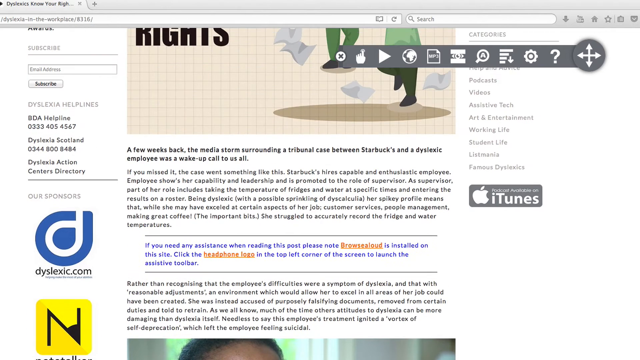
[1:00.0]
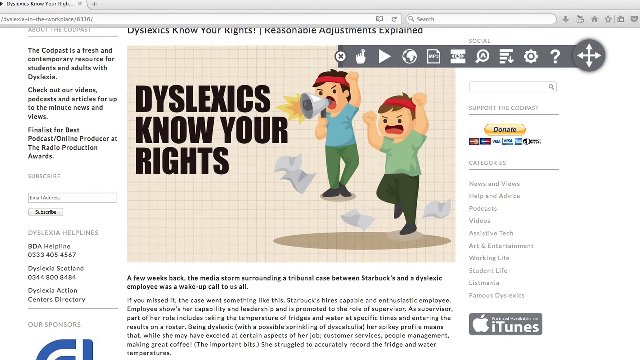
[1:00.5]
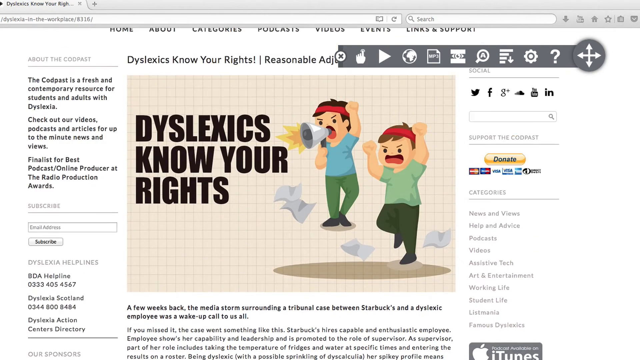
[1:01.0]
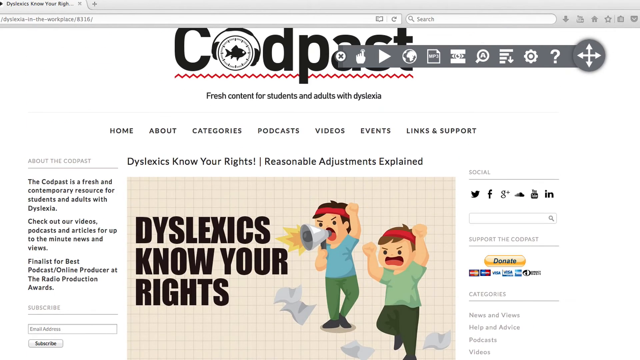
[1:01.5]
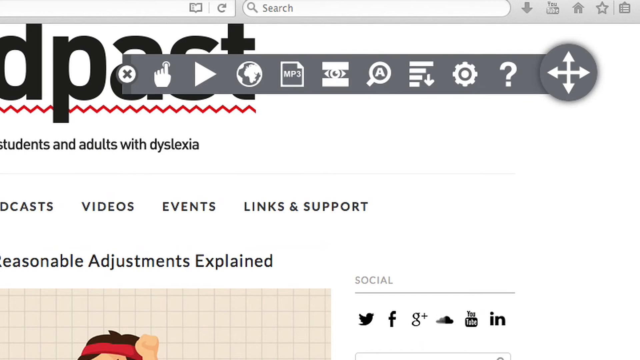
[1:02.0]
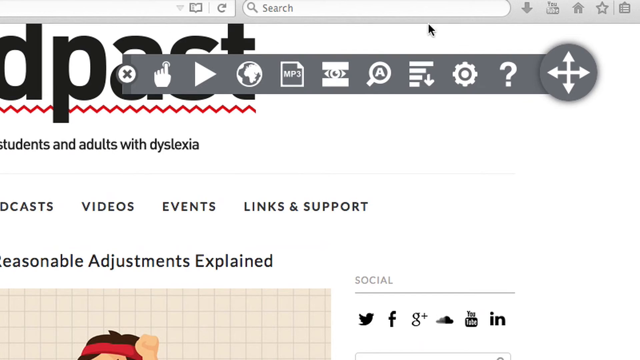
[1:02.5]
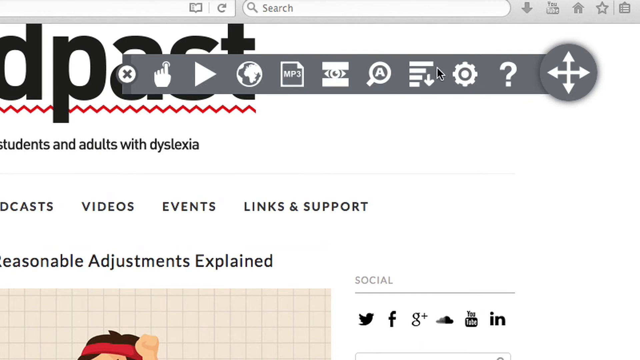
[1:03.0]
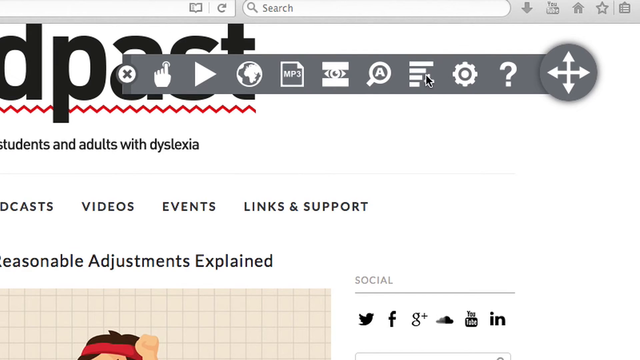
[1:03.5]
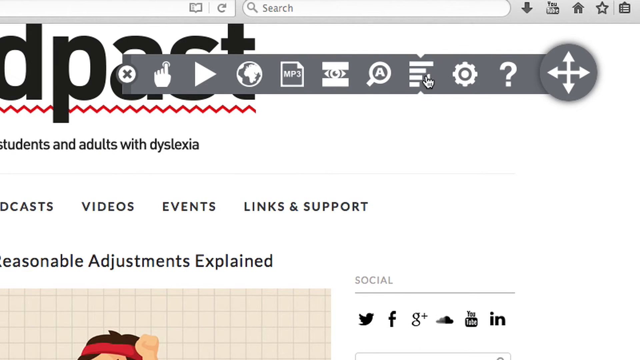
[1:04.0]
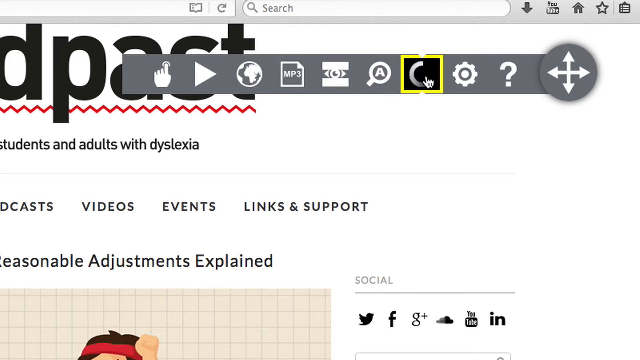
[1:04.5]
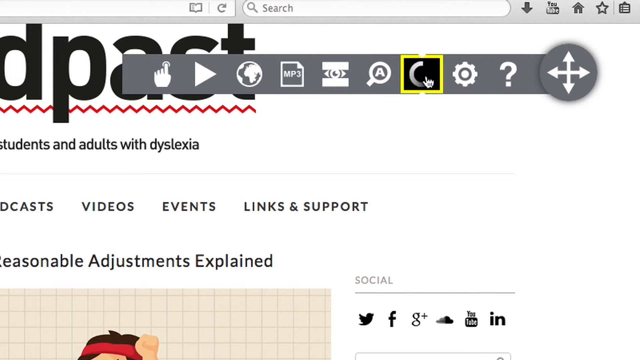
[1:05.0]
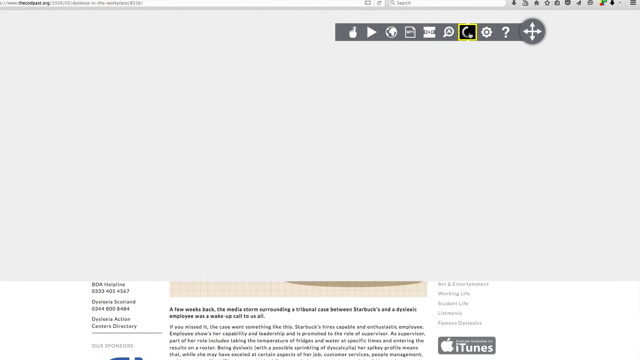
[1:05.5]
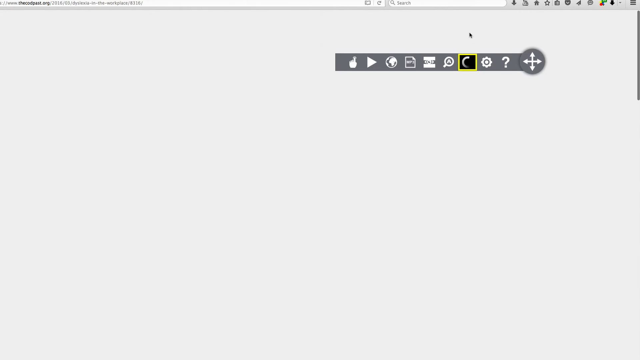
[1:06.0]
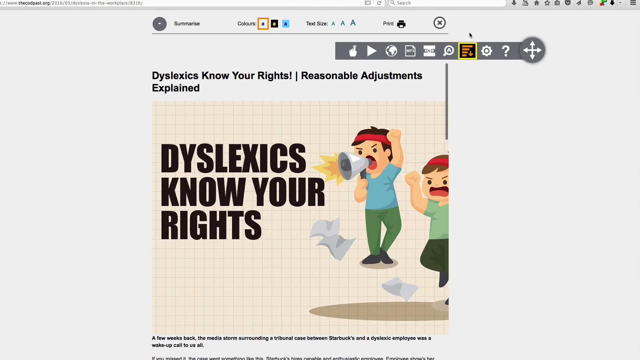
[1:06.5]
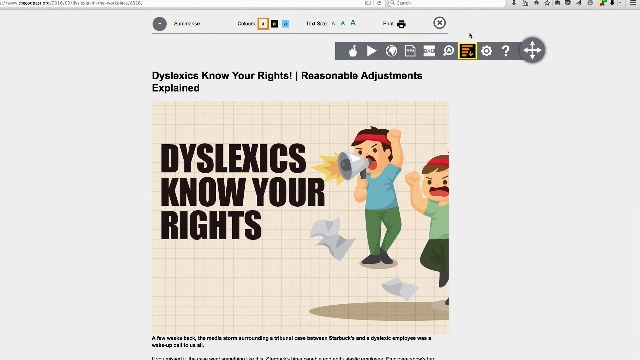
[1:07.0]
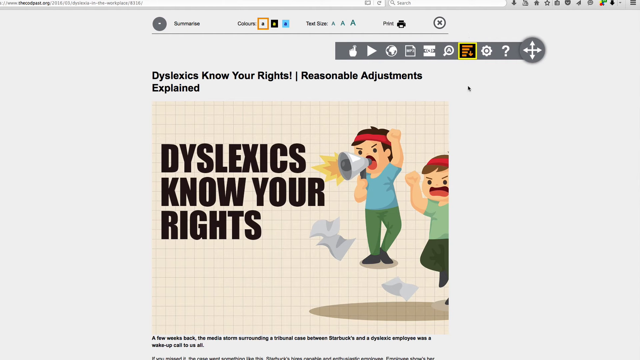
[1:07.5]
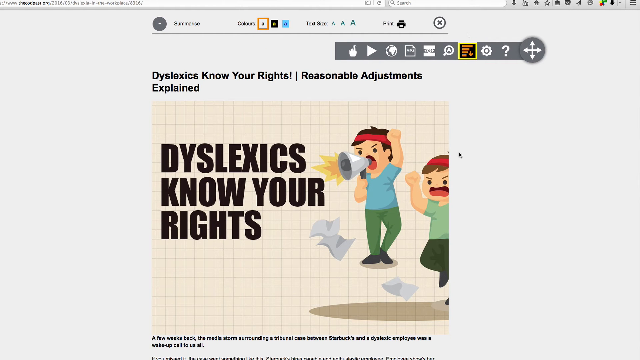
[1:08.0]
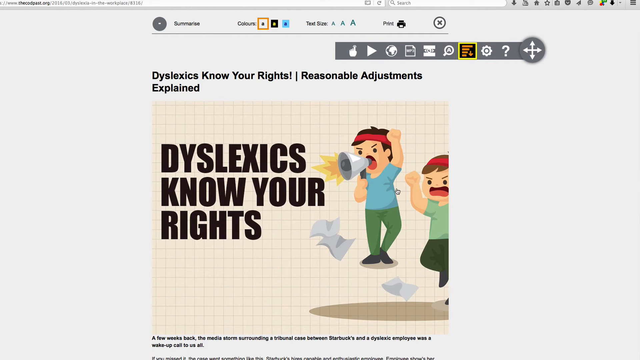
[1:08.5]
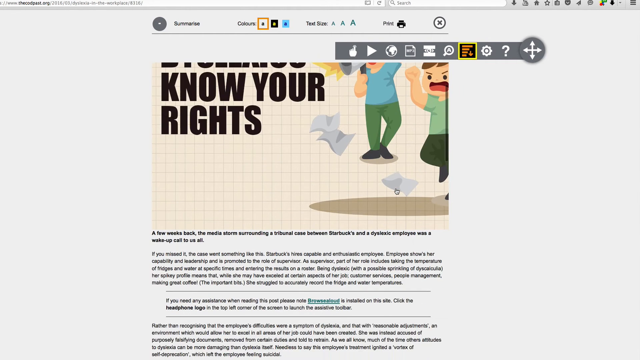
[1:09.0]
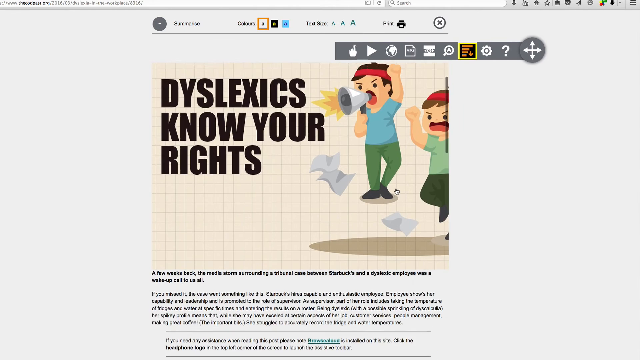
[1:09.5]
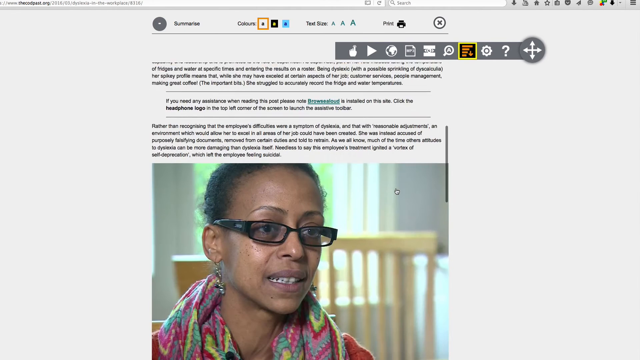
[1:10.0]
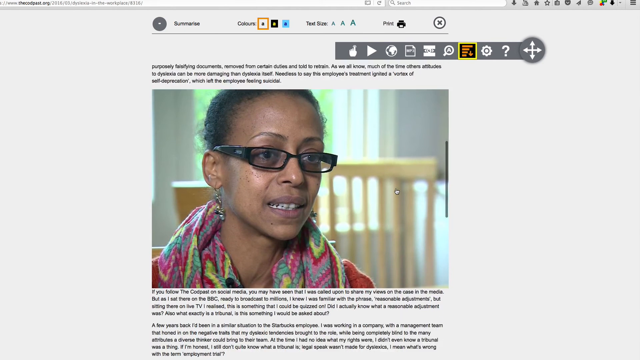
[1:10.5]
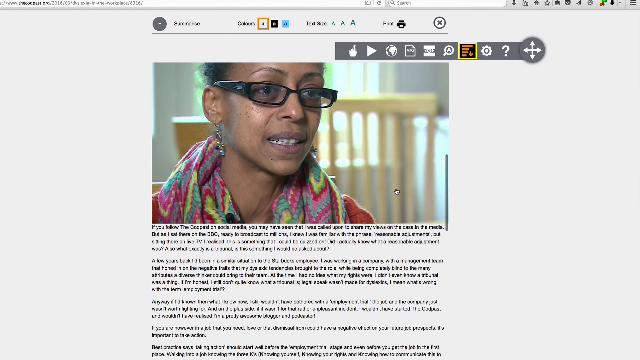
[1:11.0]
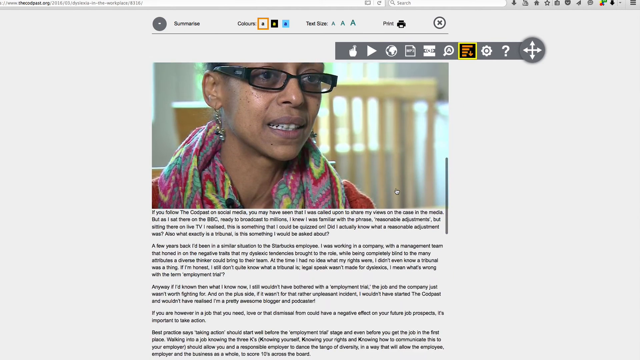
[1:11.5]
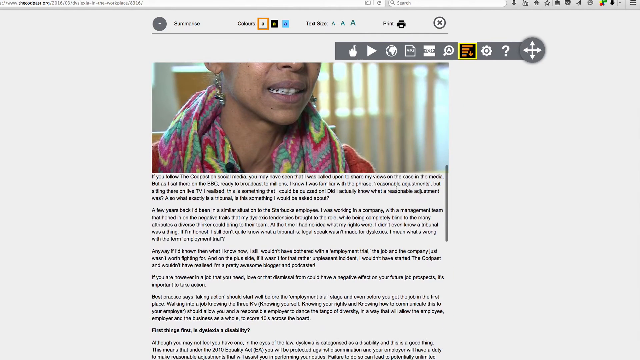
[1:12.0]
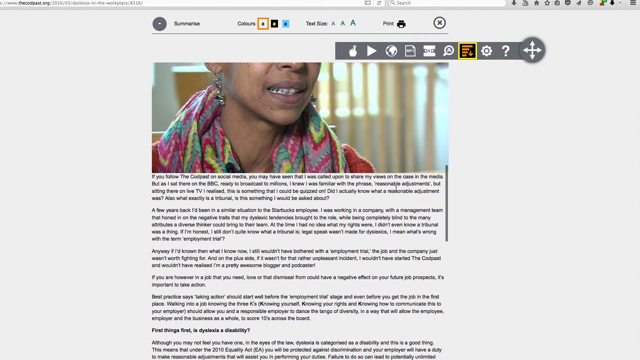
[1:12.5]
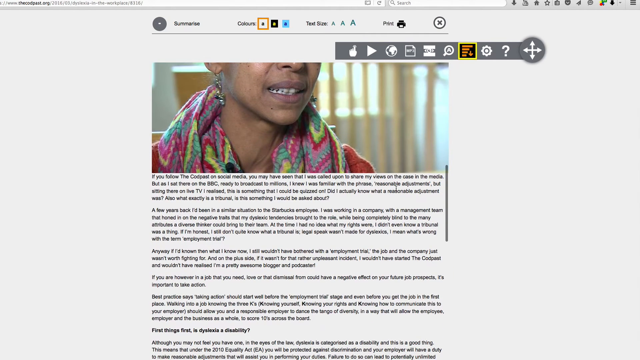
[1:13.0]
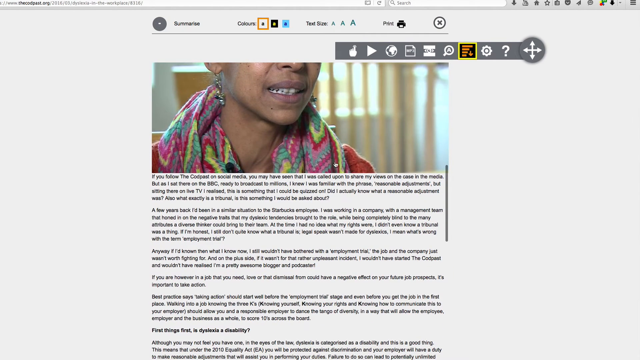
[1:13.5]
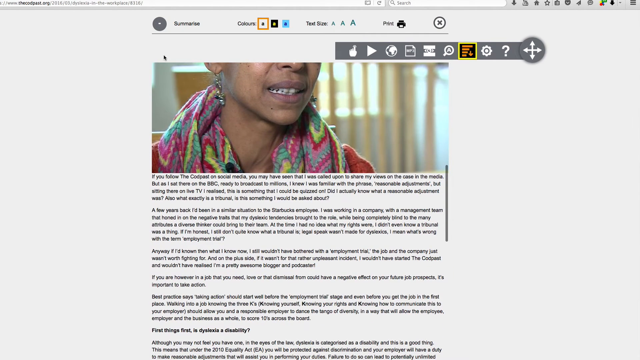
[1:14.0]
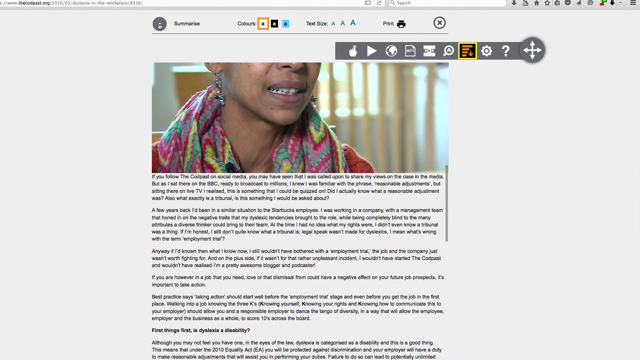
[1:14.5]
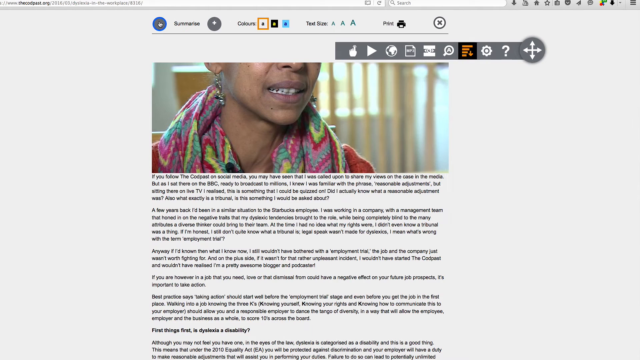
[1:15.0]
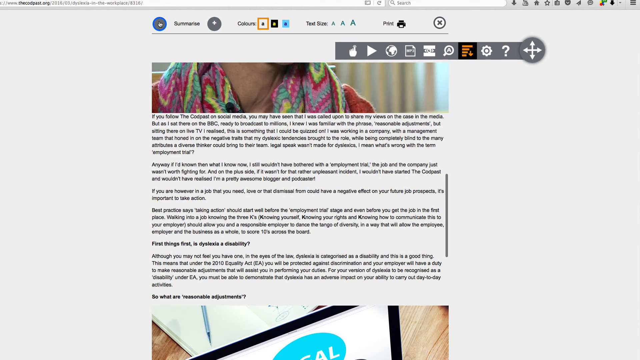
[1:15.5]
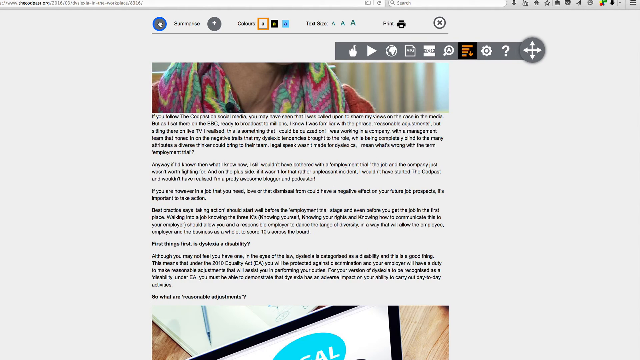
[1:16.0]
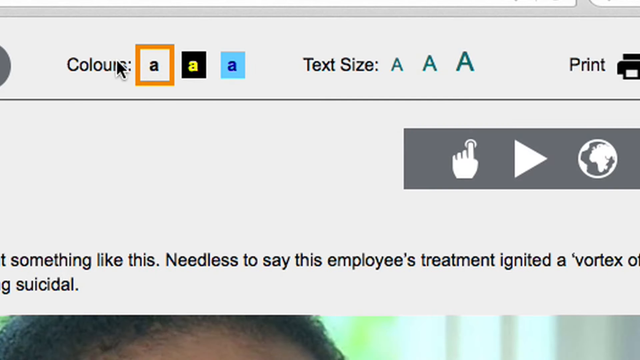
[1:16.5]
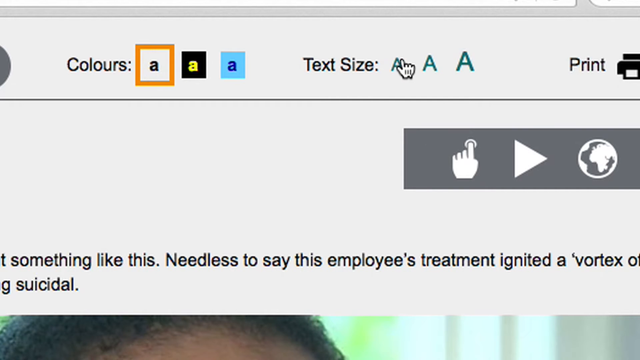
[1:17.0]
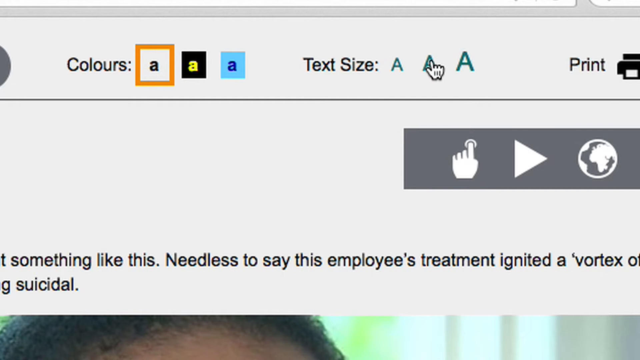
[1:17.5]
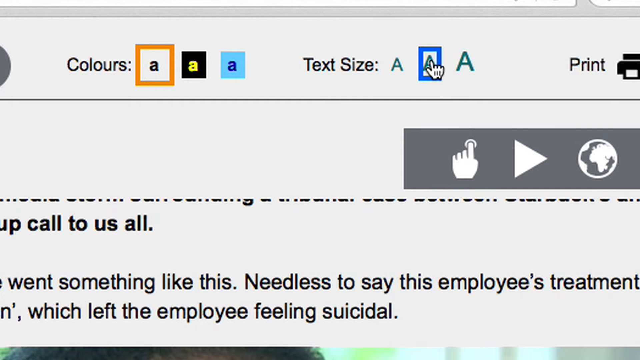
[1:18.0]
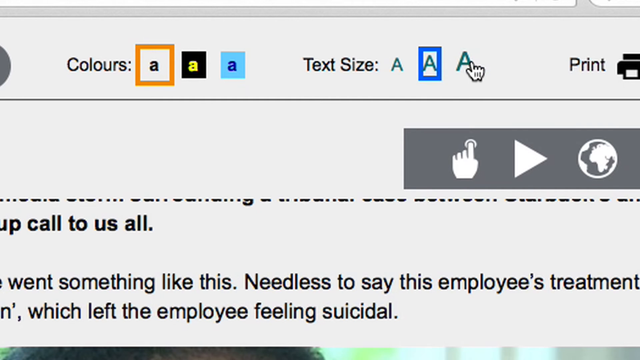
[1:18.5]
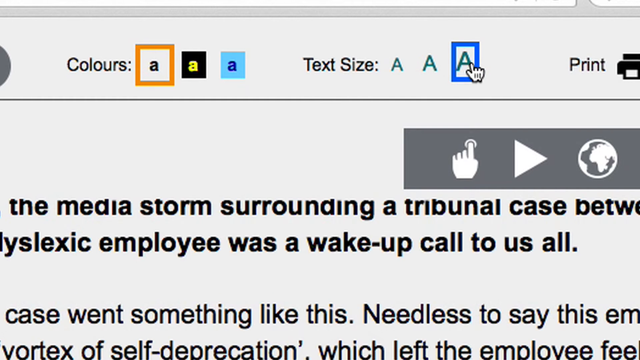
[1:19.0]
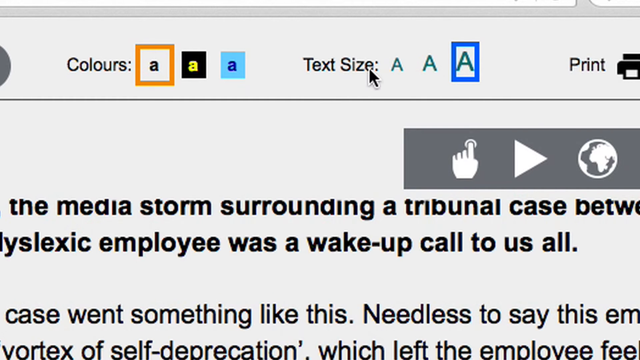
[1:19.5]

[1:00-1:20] The person stays on the article page as the article continues: "As supervisor part of her role includes taking the temperature of fridges and water at specific times entering the results on a roster," followed by text saying "she struggled to accurately record the fridge and water temperatures." A note reads "If you need assistance when reading this post please note browse aloud is installed on the site click the headphone logo in the top left corner of the screen to launch the assistive toolbar." The article continues "rather than recognizing that the employee's difficulties were a symptom of dyslexia…" There is an iTunes icon on the right side.